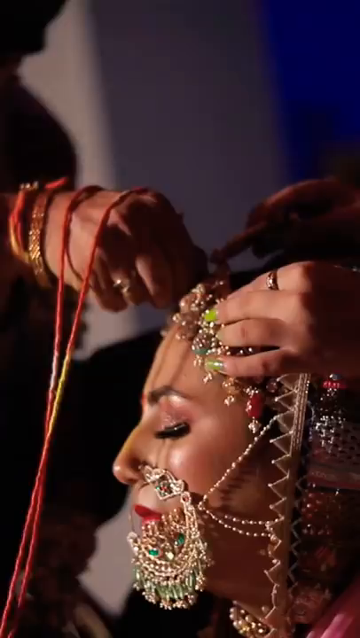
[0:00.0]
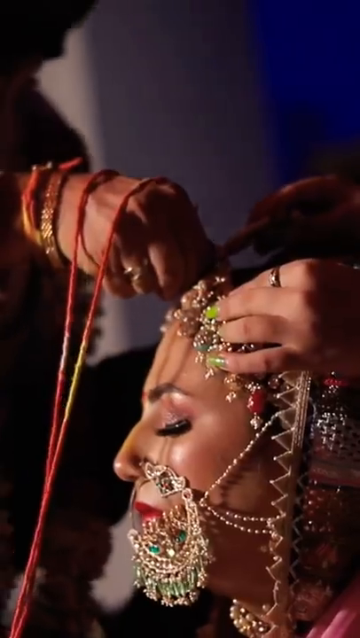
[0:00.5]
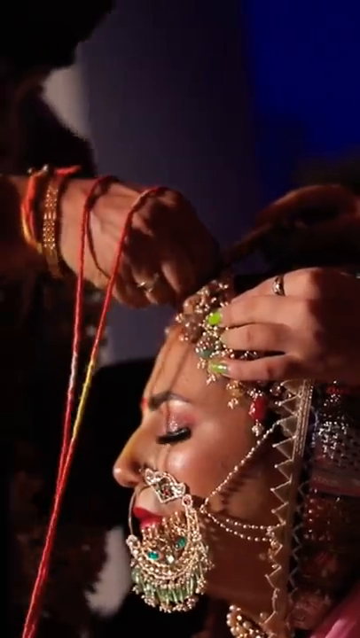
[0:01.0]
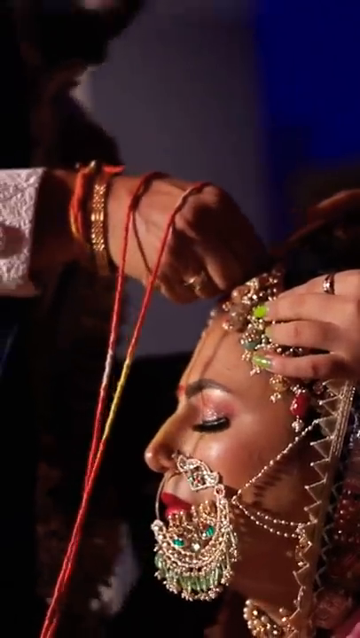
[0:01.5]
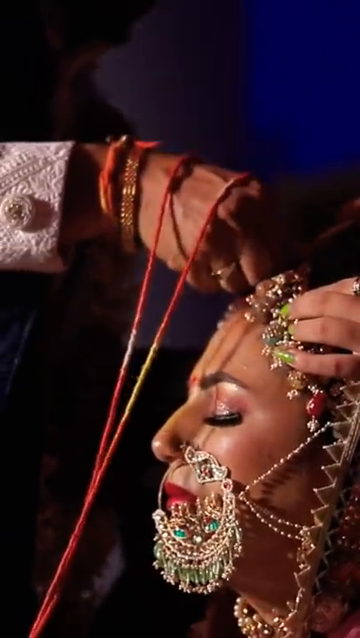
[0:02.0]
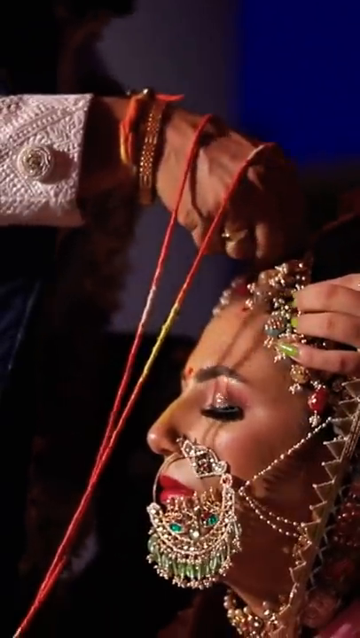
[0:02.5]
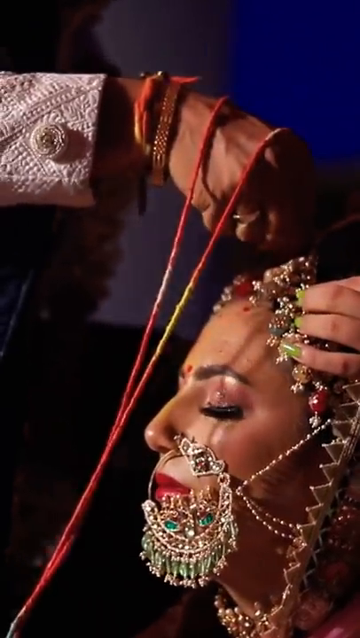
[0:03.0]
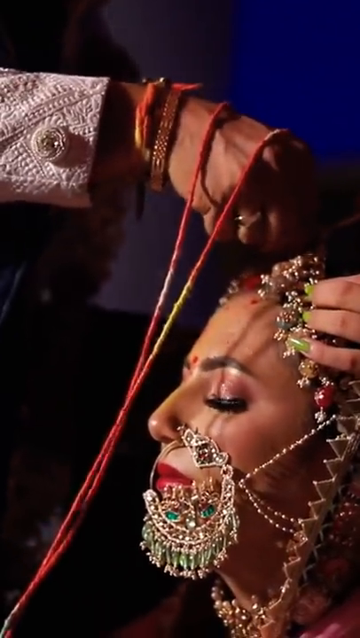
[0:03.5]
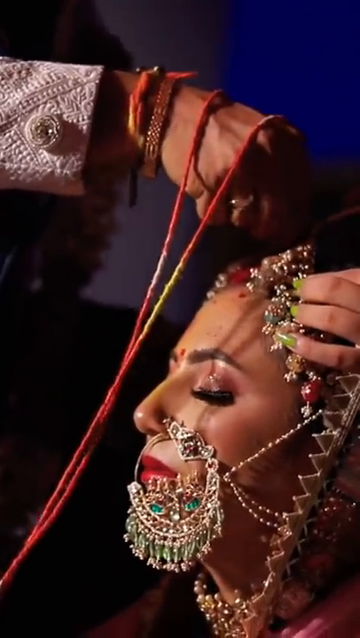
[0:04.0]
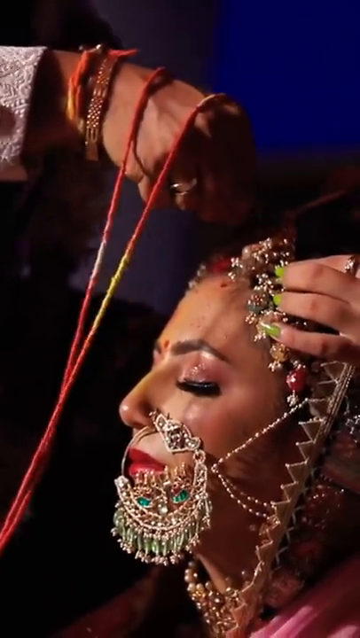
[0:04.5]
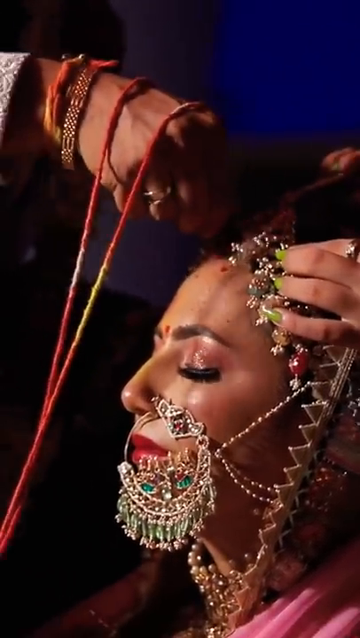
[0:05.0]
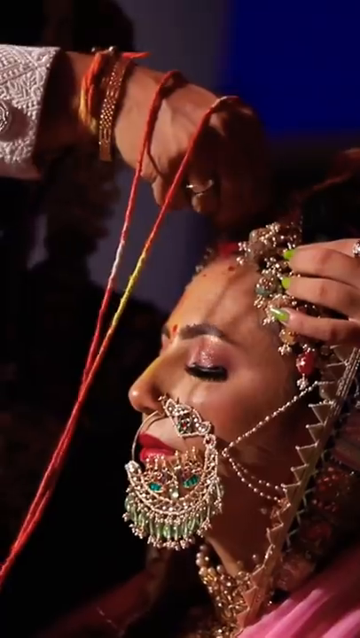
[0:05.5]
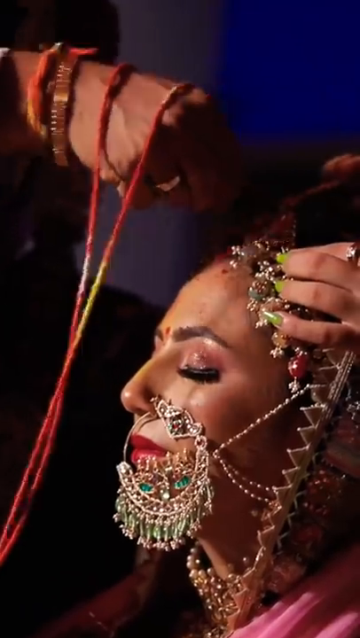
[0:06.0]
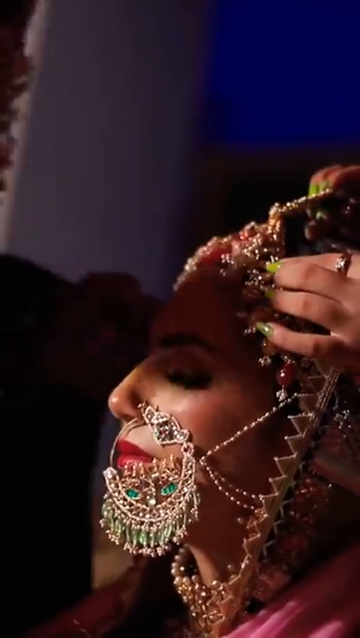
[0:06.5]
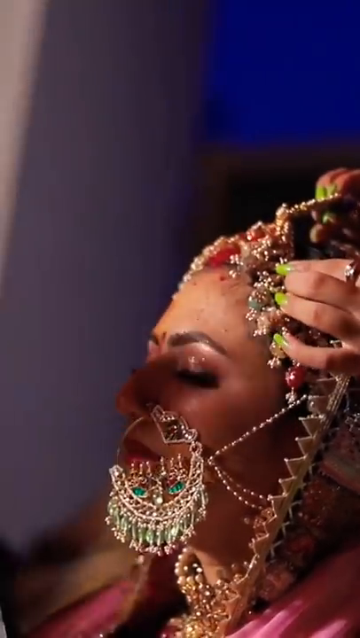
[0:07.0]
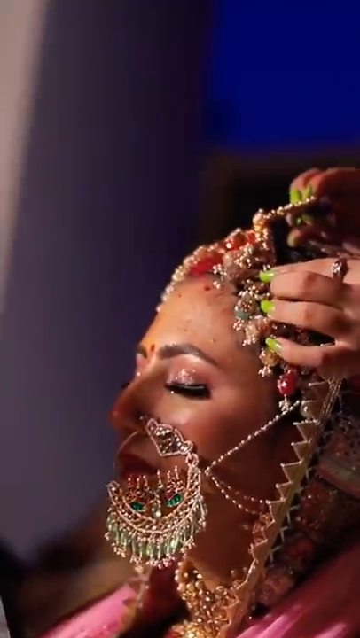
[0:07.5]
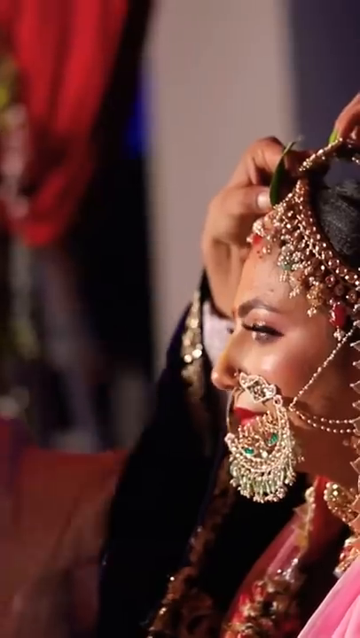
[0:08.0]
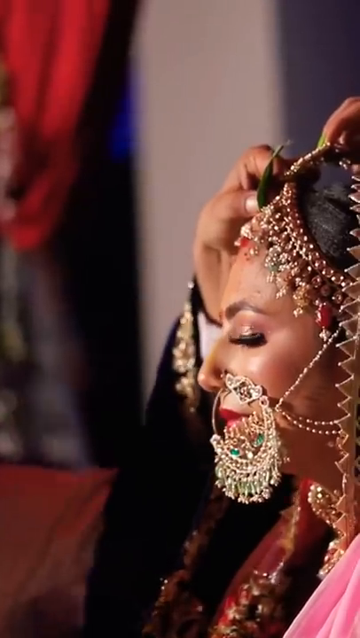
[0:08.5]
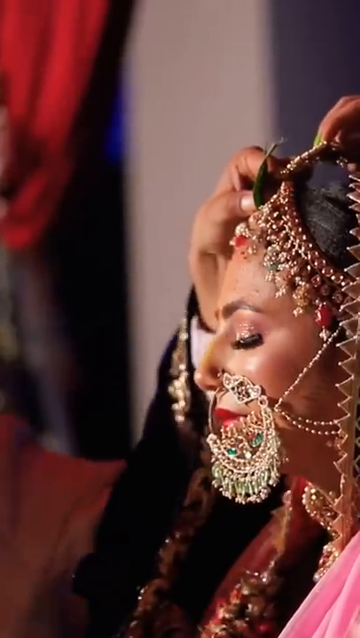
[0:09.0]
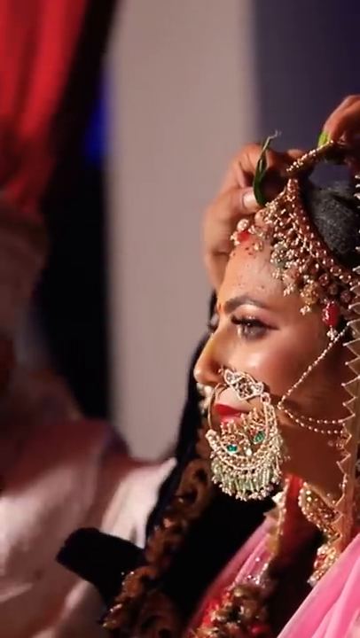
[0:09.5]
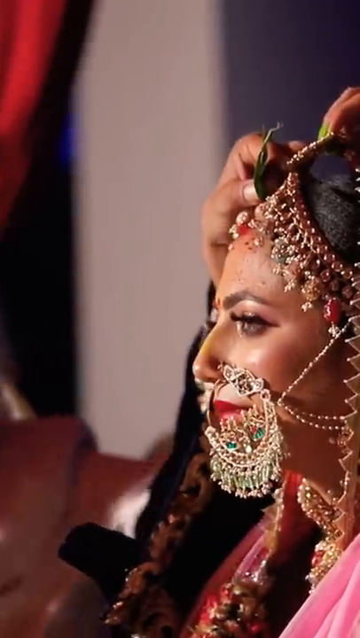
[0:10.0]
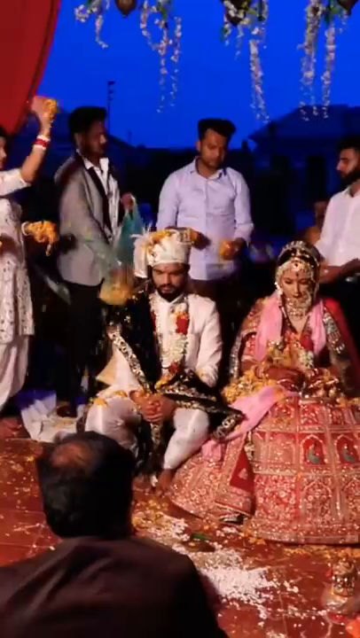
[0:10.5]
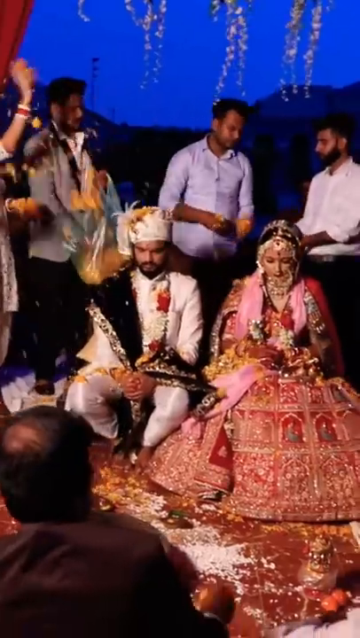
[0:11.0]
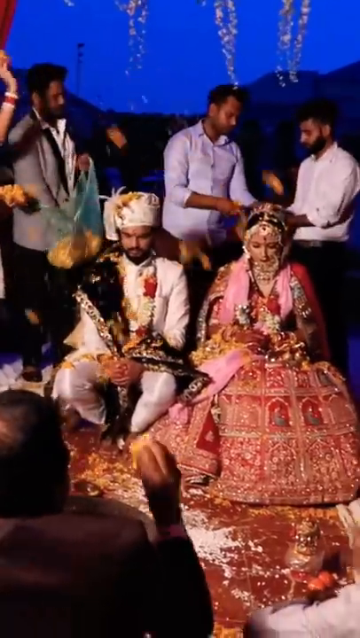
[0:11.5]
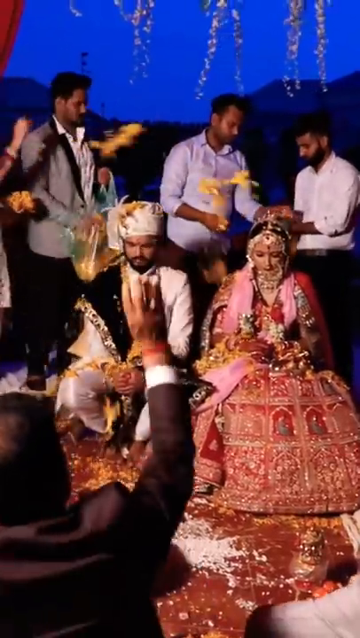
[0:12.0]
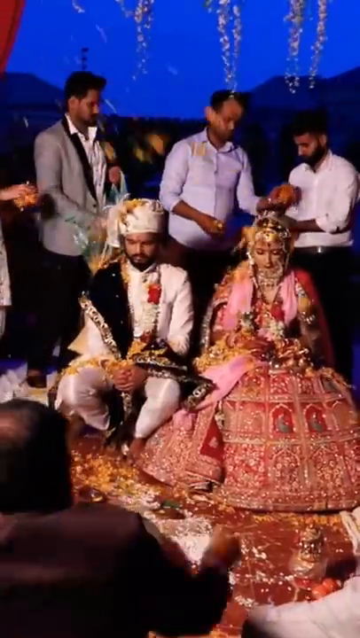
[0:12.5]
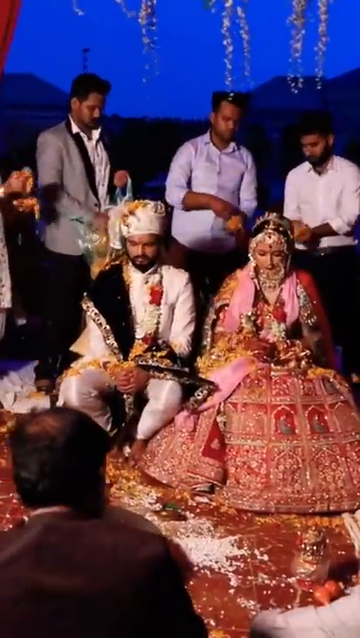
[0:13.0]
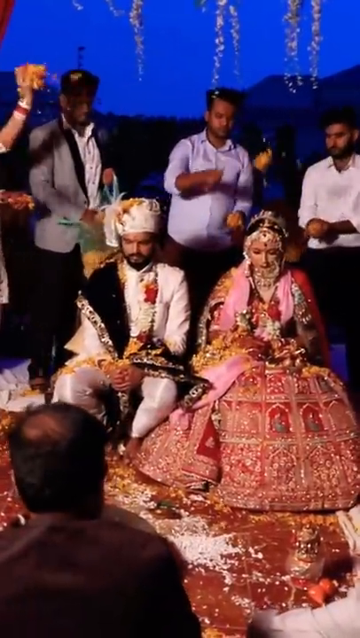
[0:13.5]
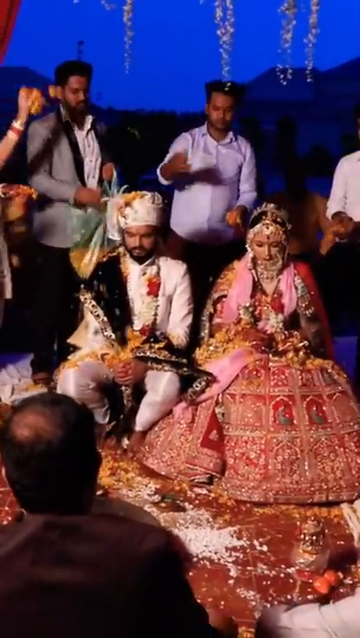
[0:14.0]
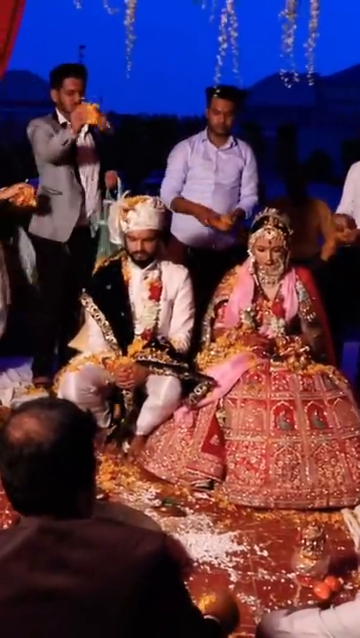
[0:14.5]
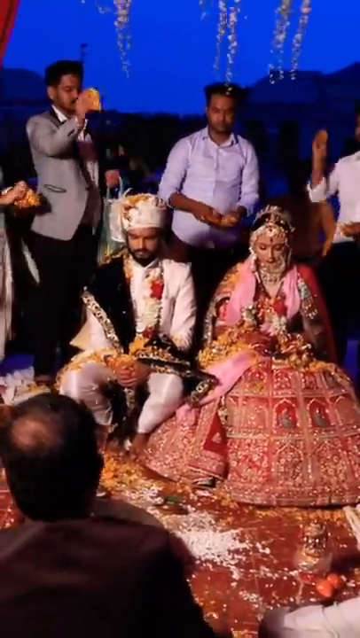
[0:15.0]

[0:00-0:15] In a portrait-format video that appears to be a wedding video of an Indian couple, the first scene shows a woman tilting her head back while a man affixes something into her hair. What is happening is hard to tell, but there is a sort of red cord wrapped around his head, and he is putting something into her forehead or her hair. Then there appears to be another arm placing some sort of decoration in her hair as well. The final shot shows the couple, a man and a woman, surrounded by a wedding party: four men in the background and one in the foreground, of whom only his back is visible. All these men shower the couple with flower petals, throwing them at the couple. The woman wears a very elaborate wedding dress and has a large nose hoop, and the man wears a white jacket, a sash and a big white hat.